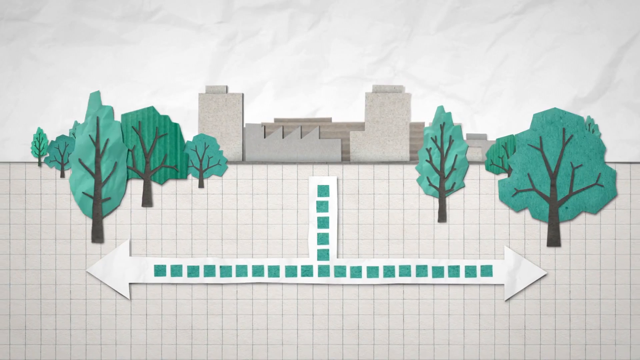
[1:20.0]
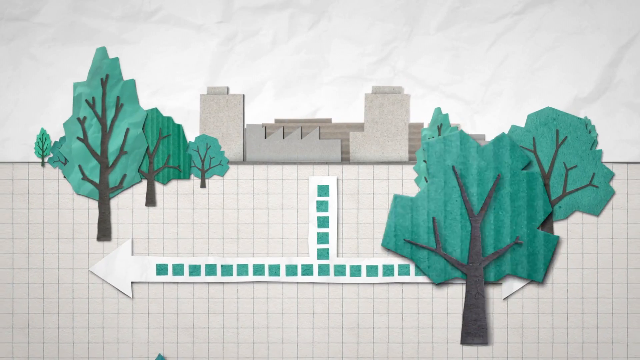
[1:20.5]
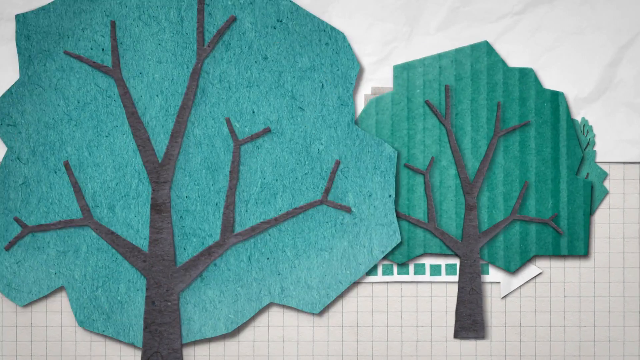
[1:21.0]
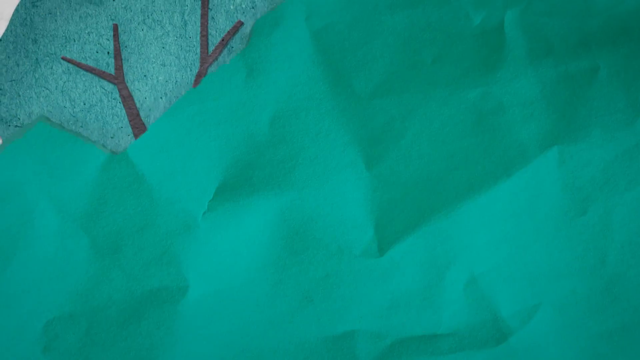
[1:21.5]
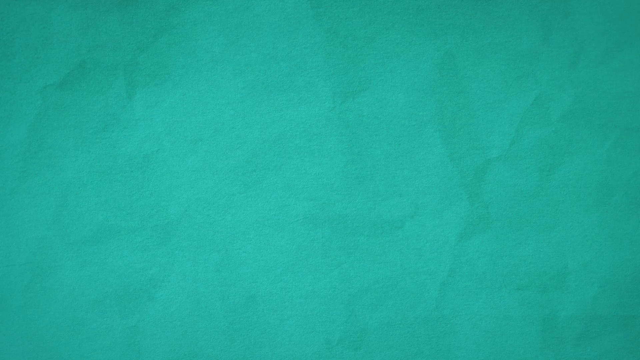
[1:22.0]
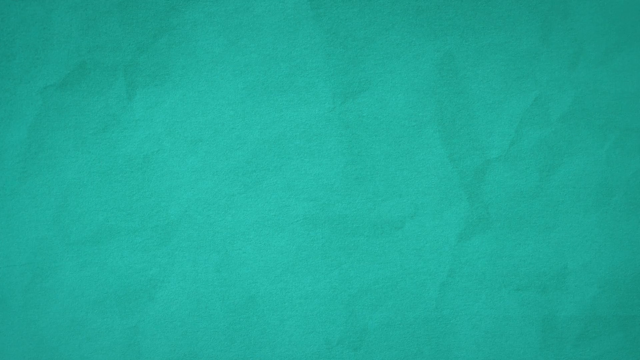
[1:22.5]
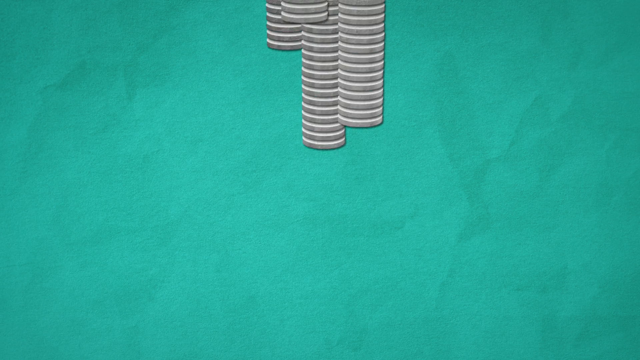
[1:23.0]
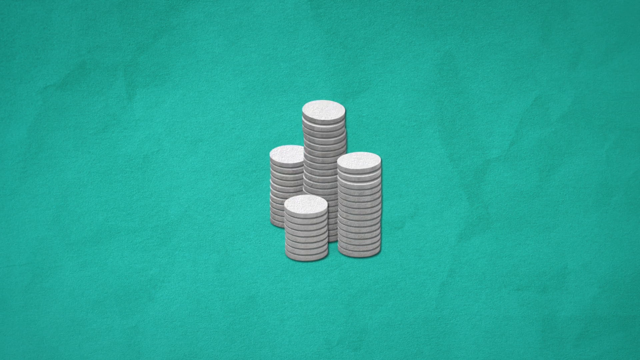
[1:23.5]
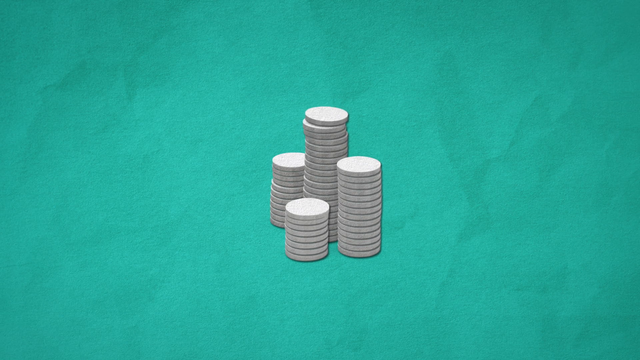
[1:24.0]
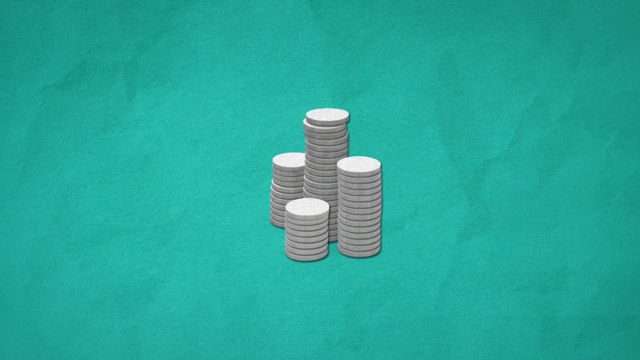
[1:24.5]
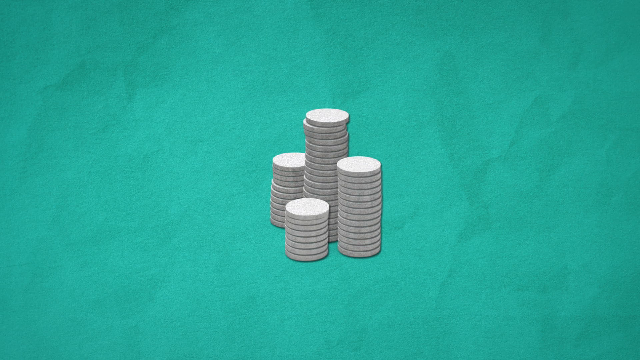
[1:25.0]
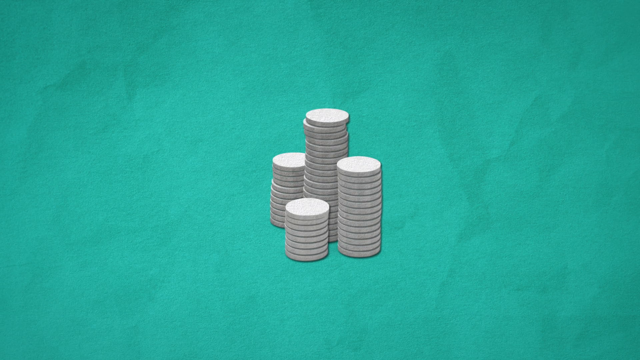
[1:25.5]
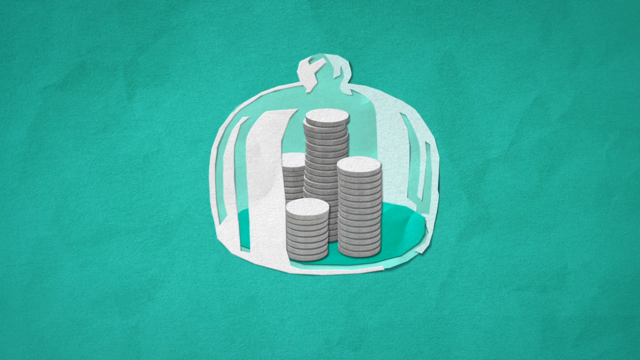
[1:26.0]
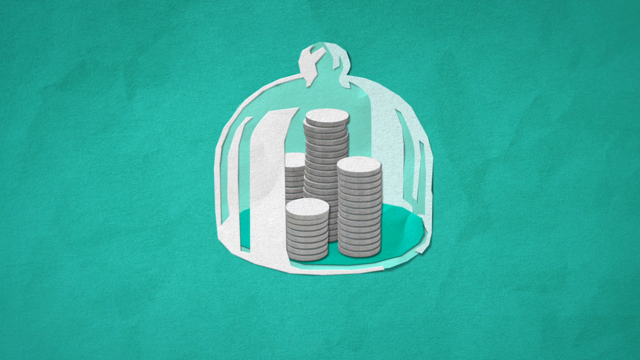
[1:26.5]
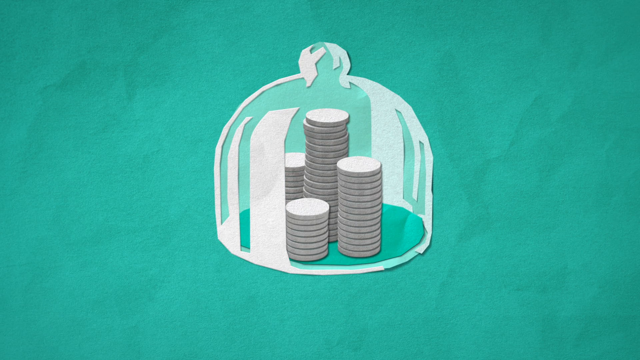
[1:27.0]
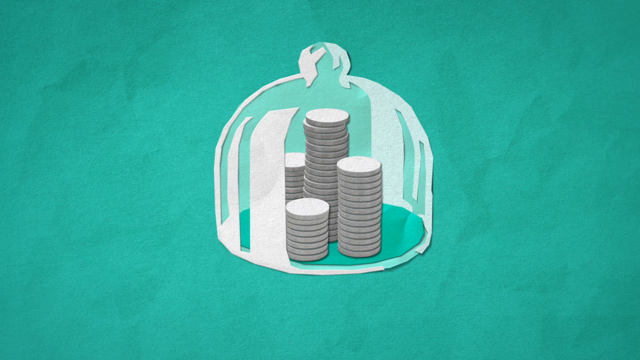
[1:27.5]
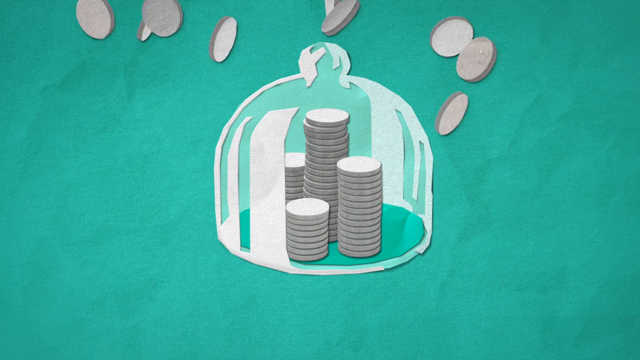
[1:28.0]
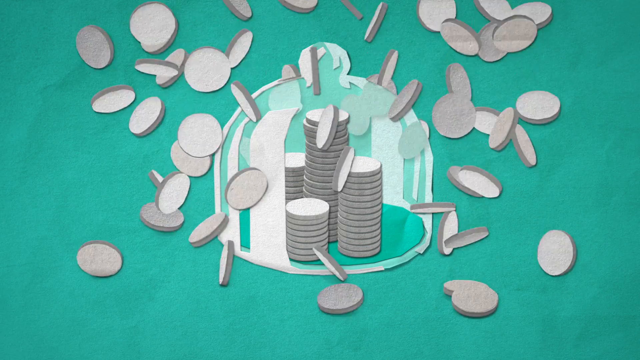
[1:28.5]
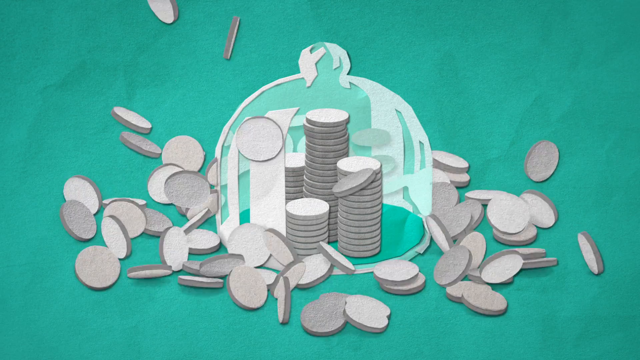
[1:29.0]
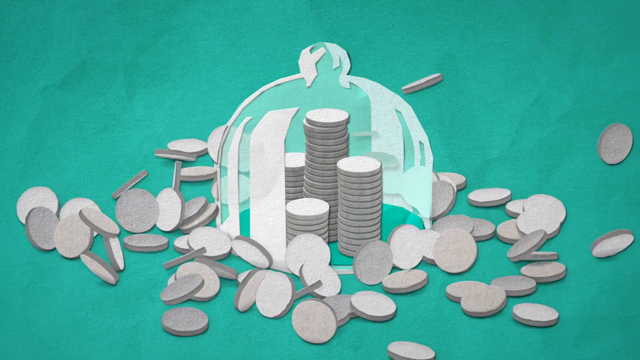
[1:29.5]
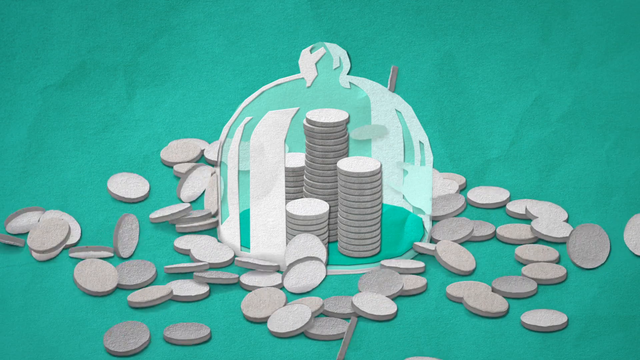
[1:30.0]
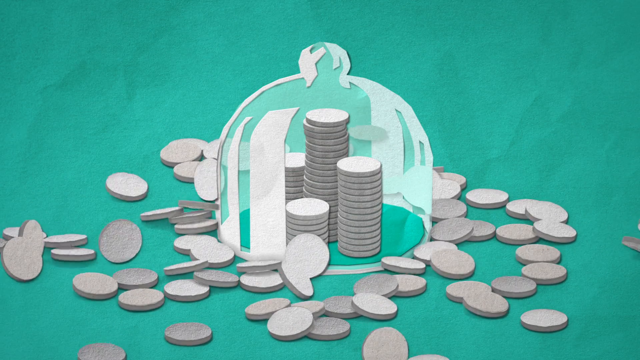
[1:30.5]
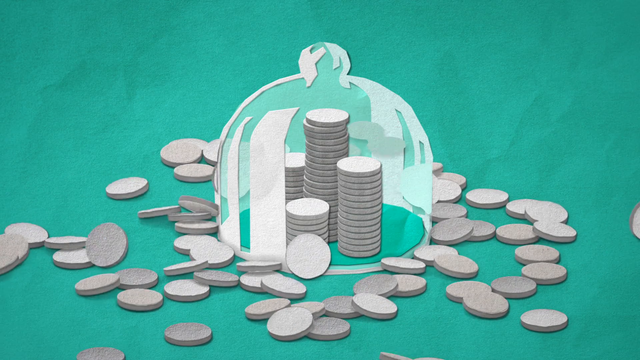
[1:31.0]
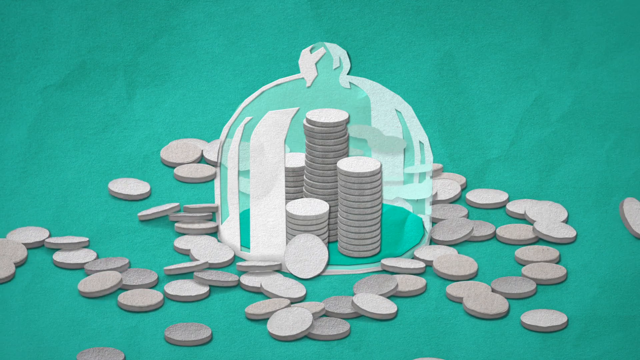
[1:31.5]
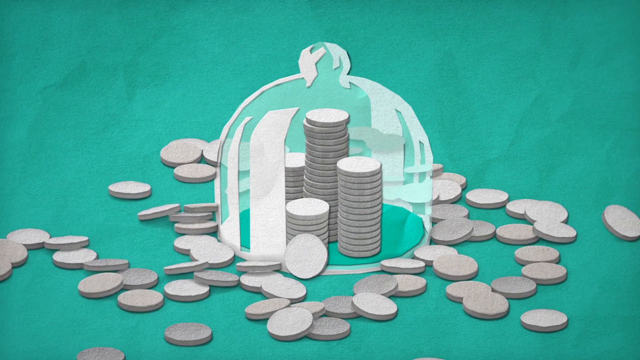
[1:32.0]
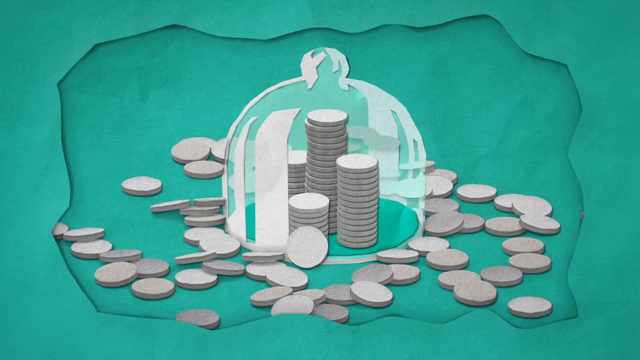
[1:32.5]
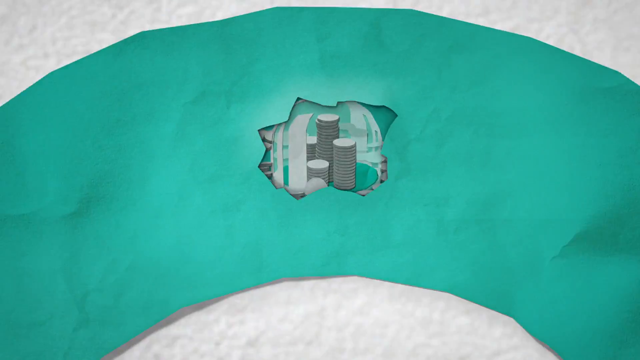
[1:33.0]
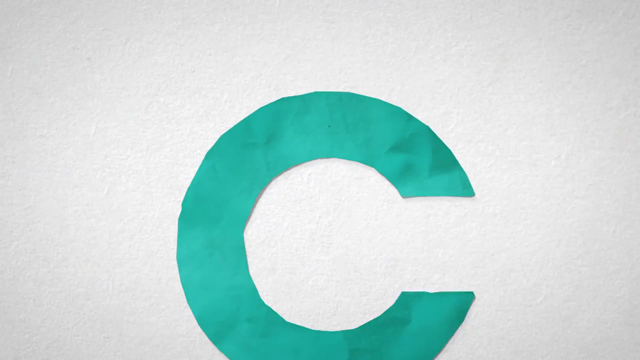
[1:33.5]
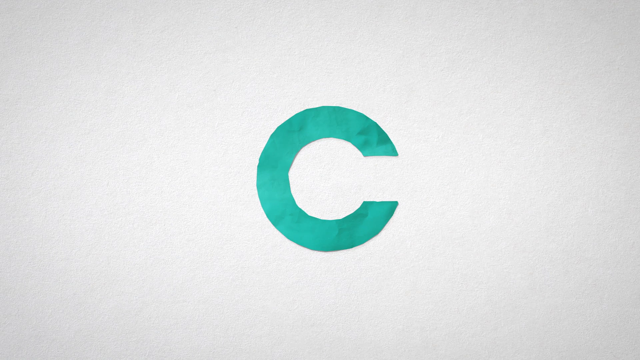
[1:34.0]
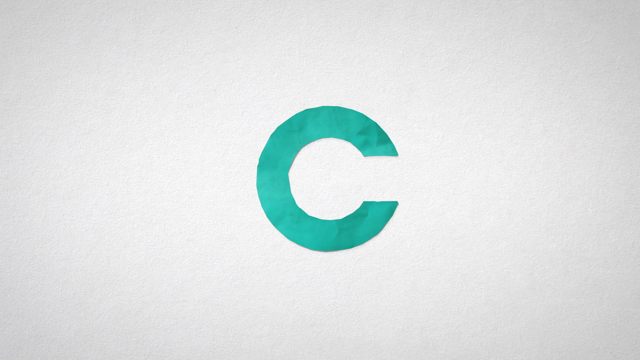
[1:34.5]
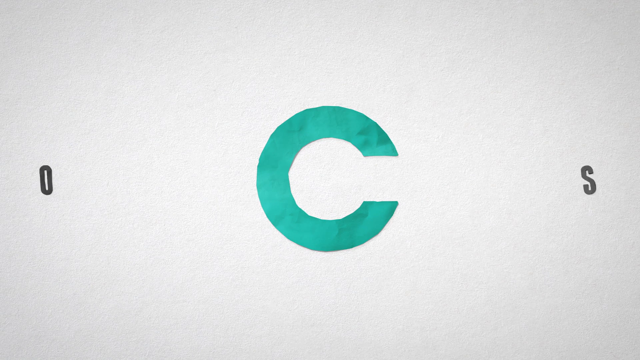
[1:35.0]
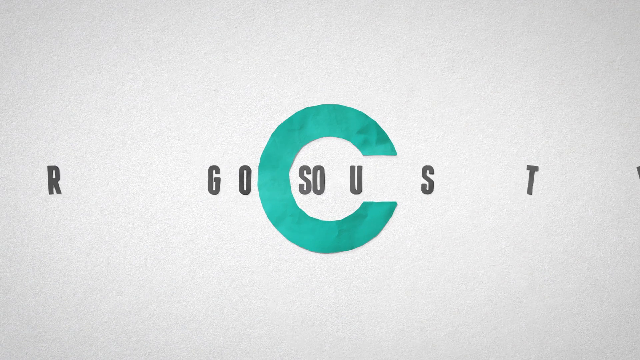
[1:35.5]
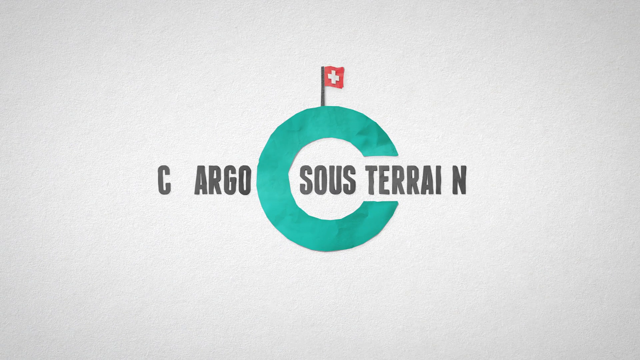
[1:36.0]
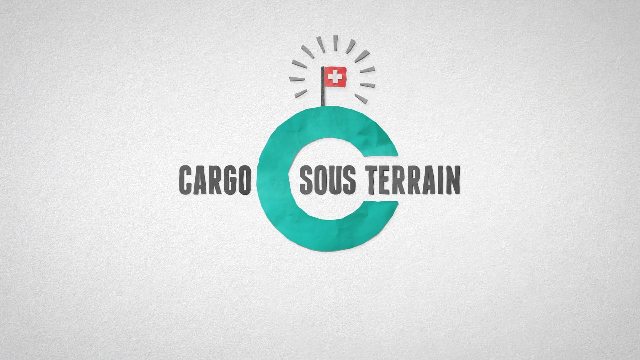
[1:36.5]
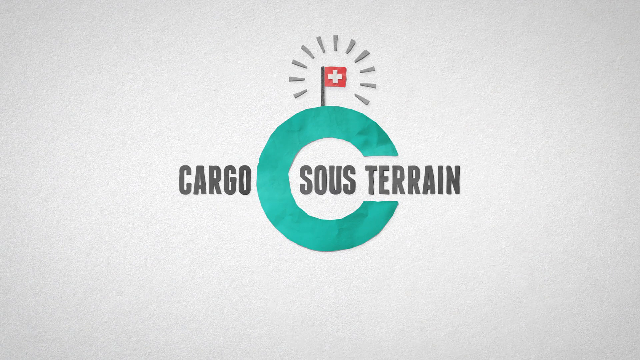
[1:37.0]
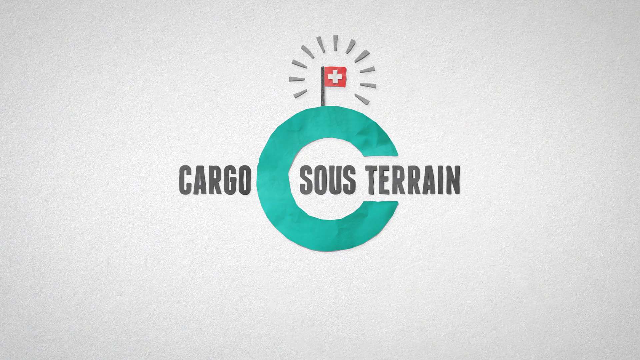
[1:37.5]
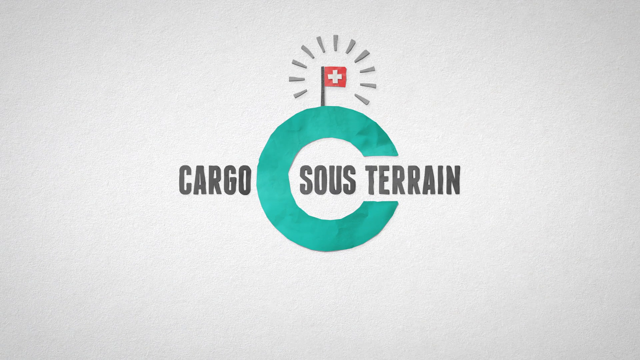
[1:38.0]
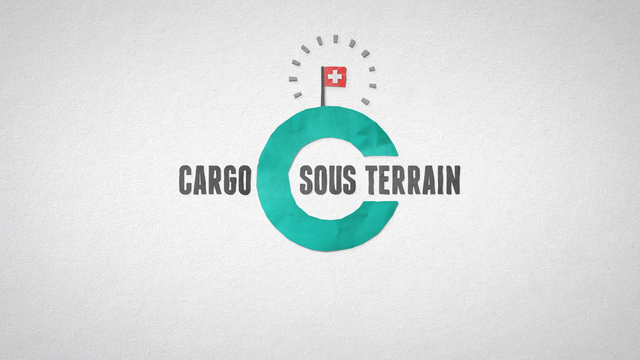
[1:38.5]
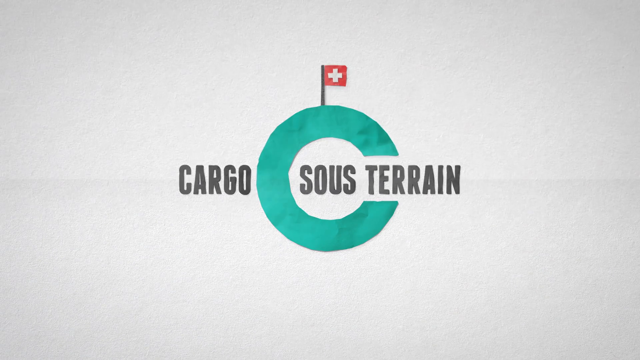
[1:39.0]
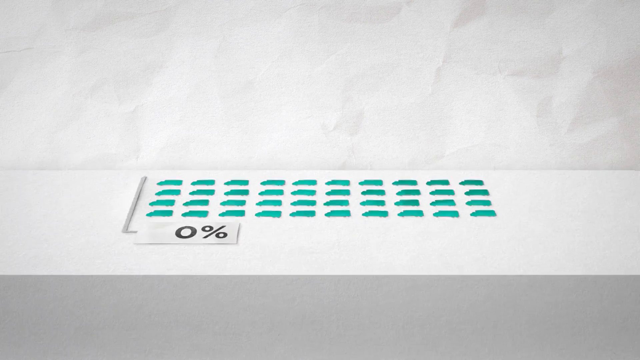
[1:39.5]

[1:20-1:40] On a teal background, gray coins come down from the top of the frame and are promptly covered by a glass dome. More coins rain down outside the dome and scatter all over the blue background. The background zooms out, a teal sea appears on the screen, and the logo "Cargo Seuss Terrain" appears with a little red flag with a cross on it; when the flag appears, a bunch of little gray lines come out from it. It then fades to a white background showing an outline of the city with a bunch of teal blue trucks underneath it, approximately 40, and a percentage appears below the trucks, starting at zero. Everything is made of paper or appears paper-textured, with slight gradient differences and slight shadows.